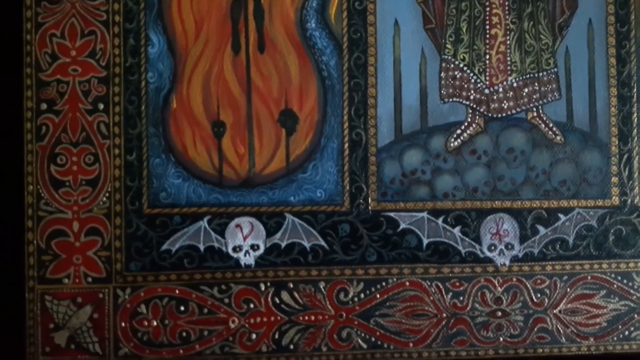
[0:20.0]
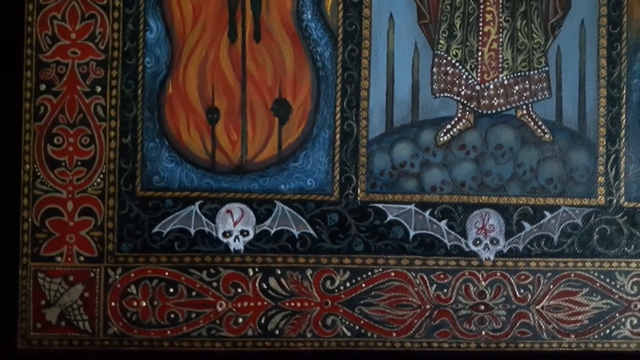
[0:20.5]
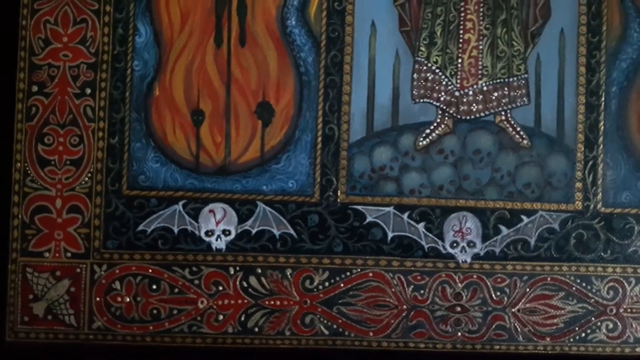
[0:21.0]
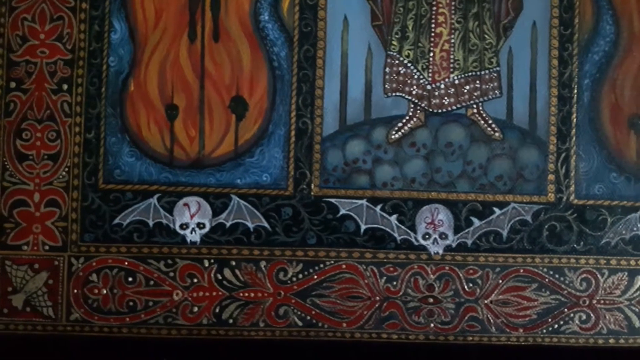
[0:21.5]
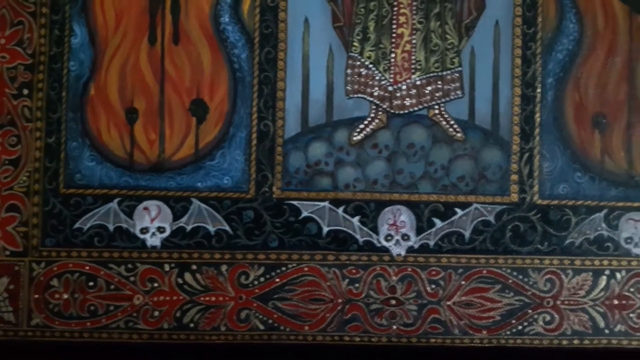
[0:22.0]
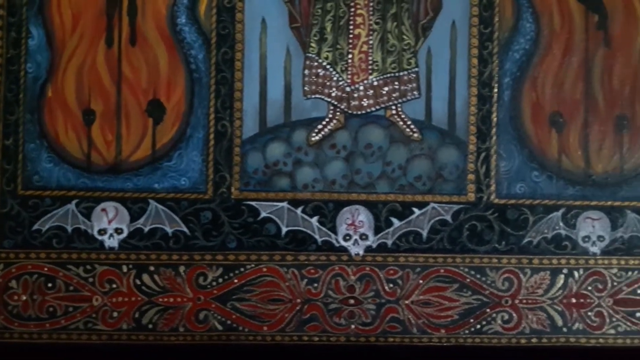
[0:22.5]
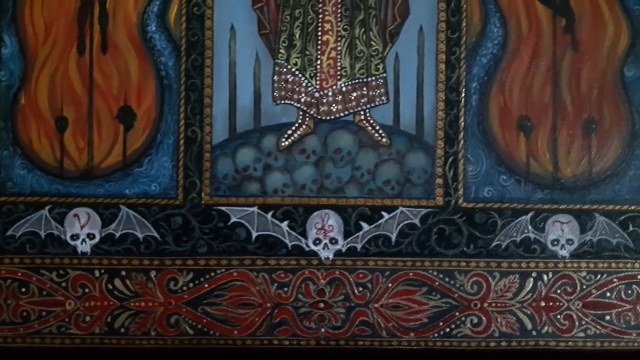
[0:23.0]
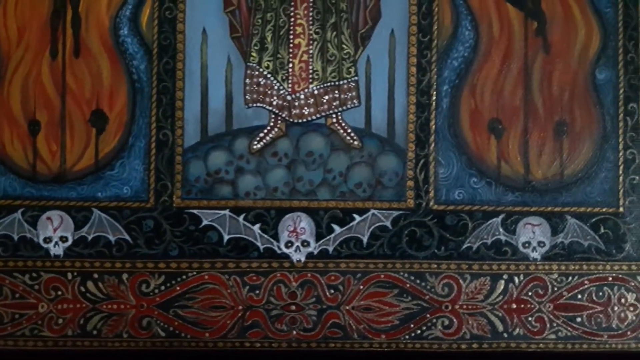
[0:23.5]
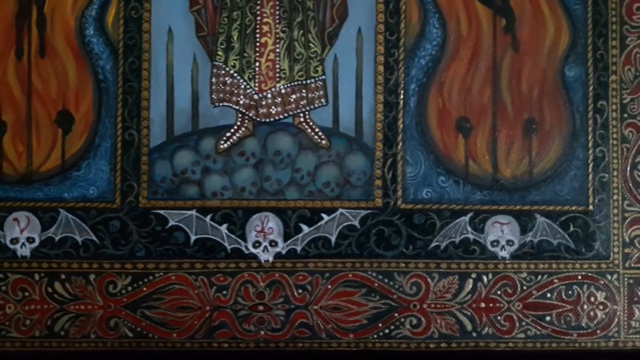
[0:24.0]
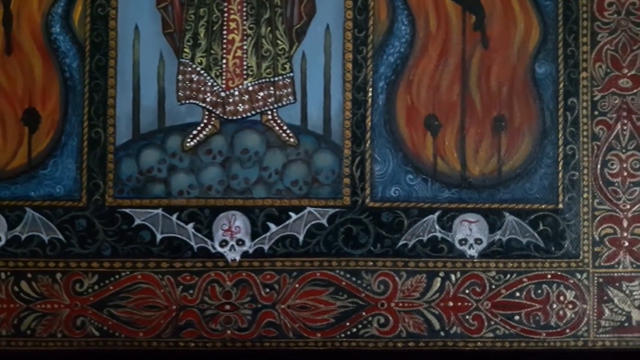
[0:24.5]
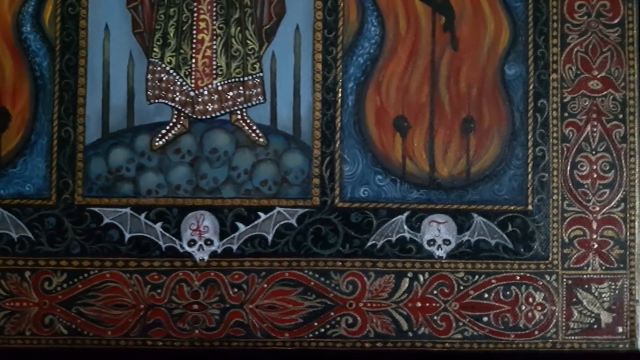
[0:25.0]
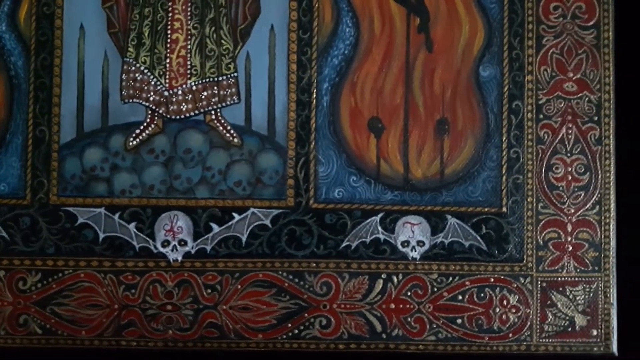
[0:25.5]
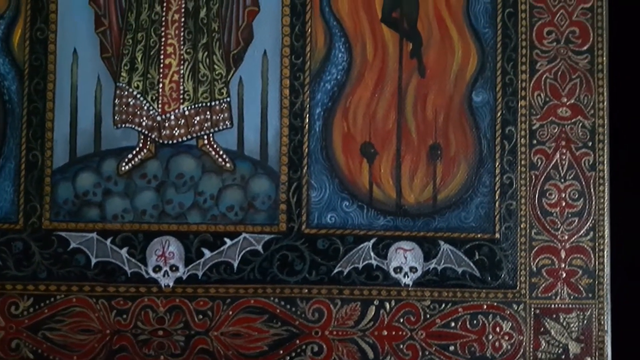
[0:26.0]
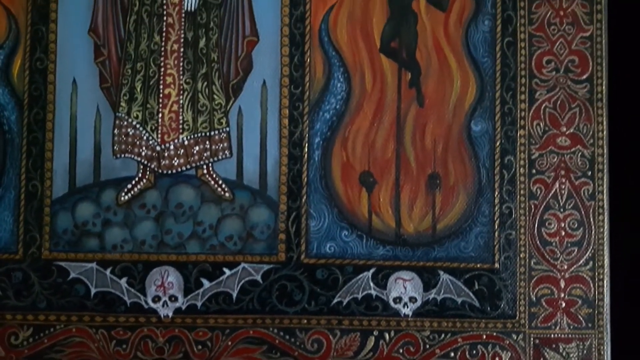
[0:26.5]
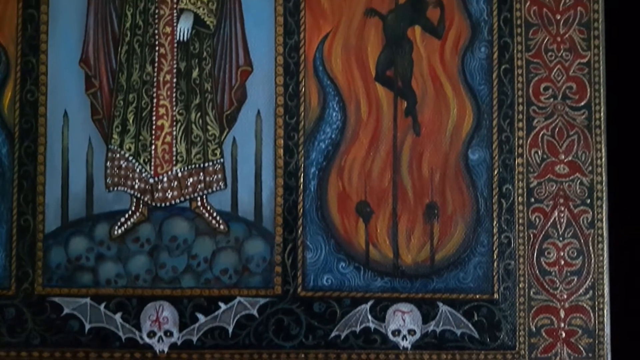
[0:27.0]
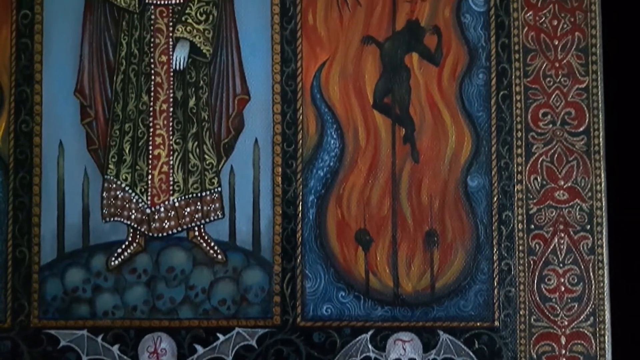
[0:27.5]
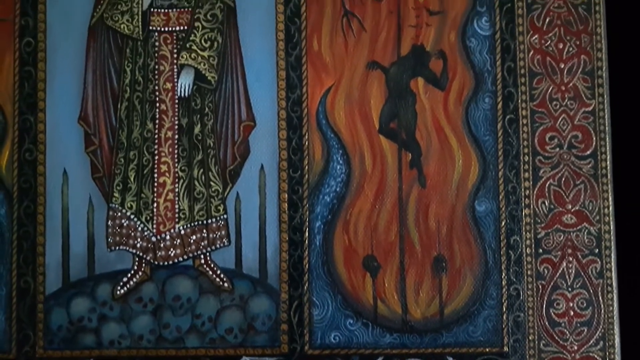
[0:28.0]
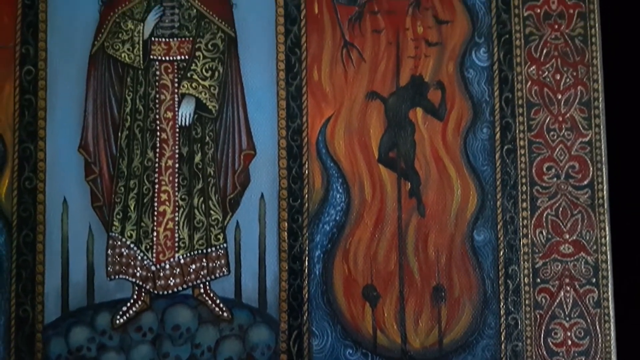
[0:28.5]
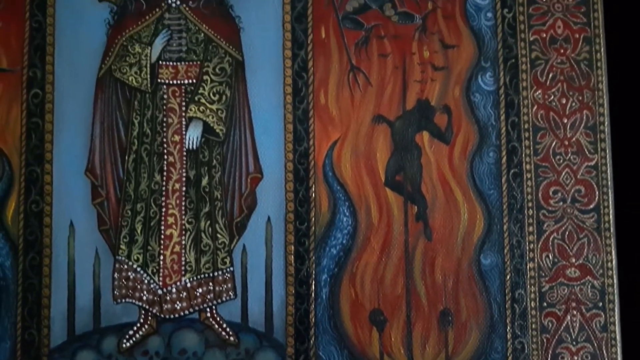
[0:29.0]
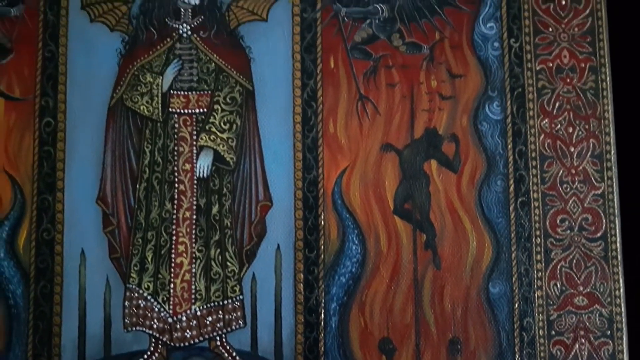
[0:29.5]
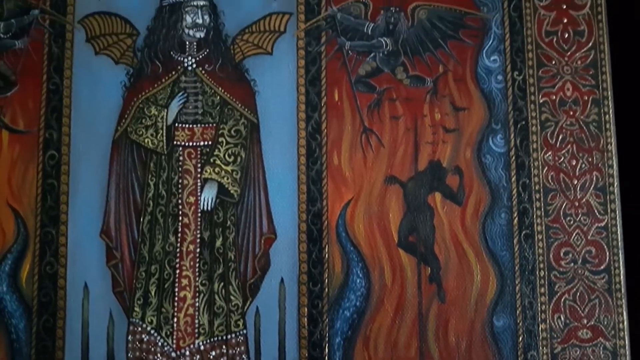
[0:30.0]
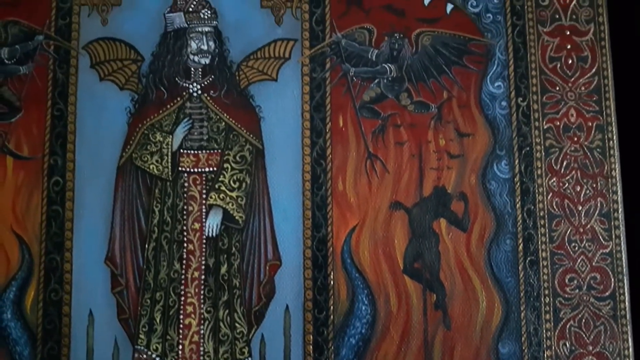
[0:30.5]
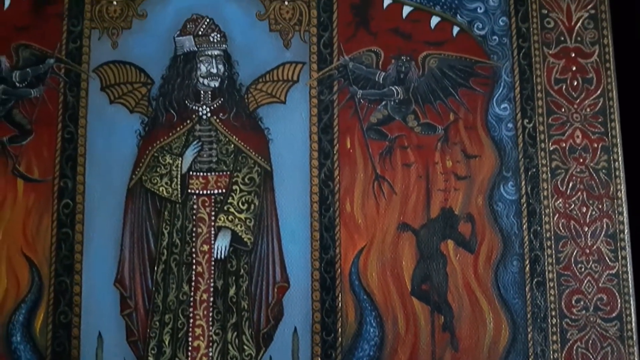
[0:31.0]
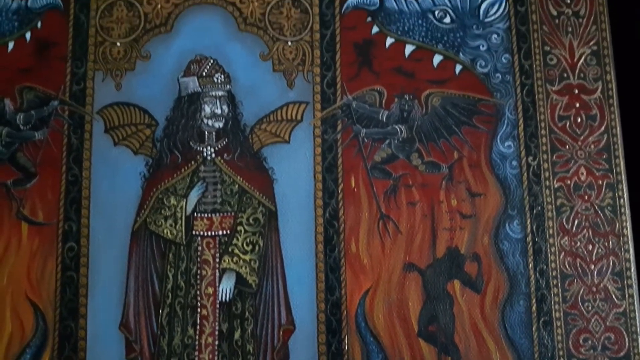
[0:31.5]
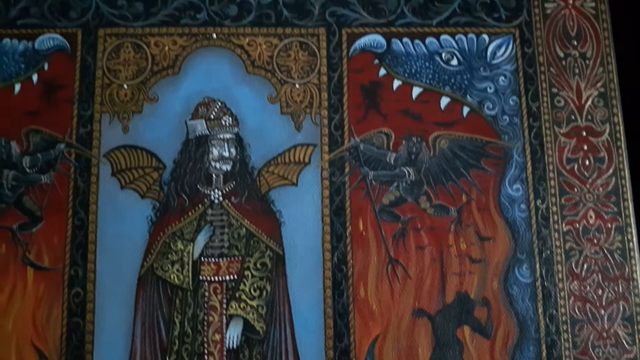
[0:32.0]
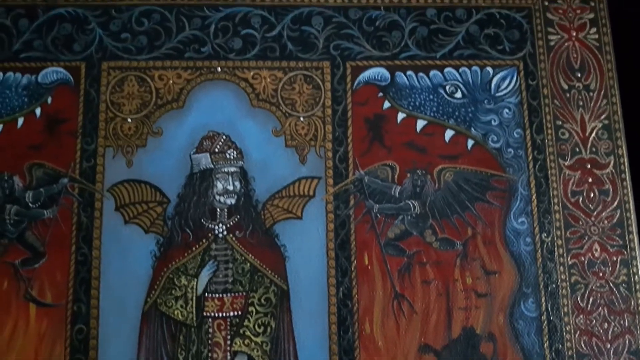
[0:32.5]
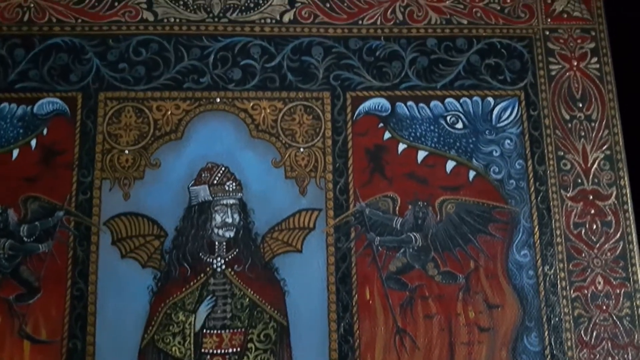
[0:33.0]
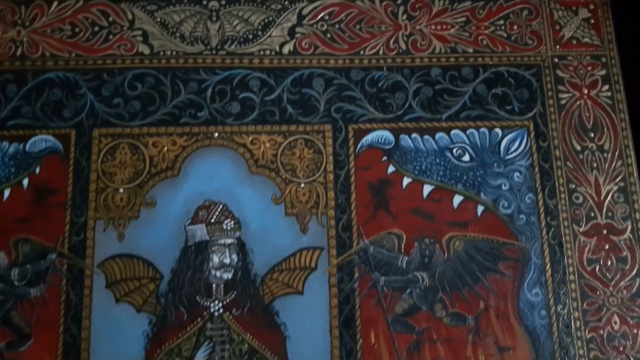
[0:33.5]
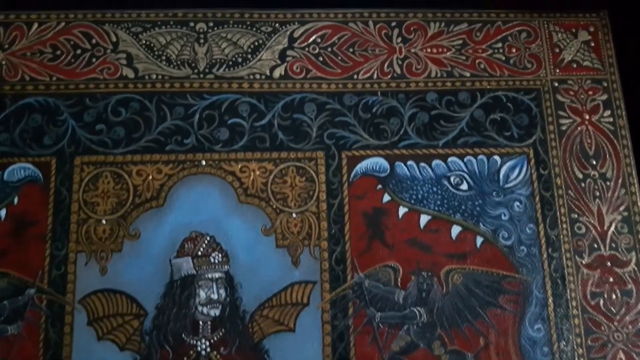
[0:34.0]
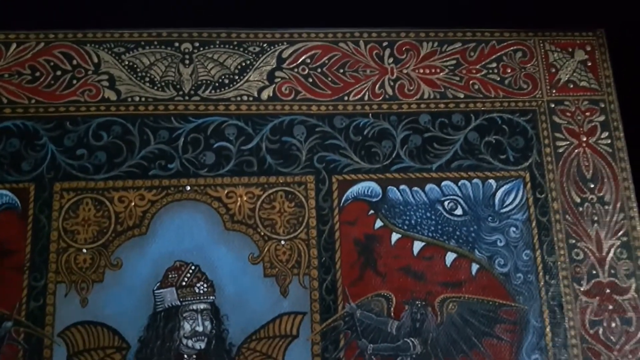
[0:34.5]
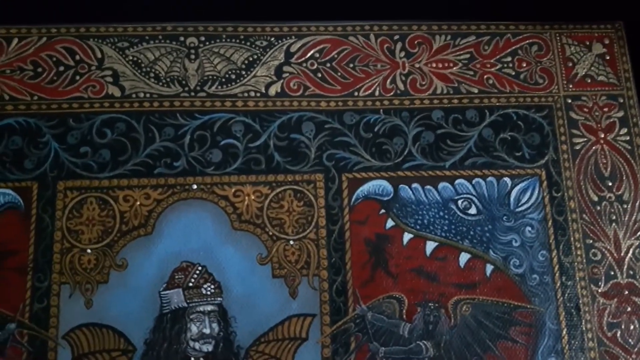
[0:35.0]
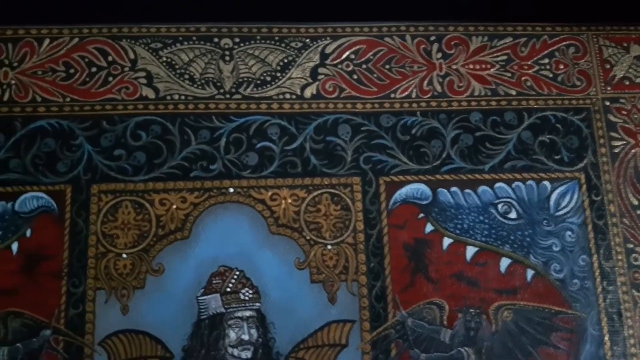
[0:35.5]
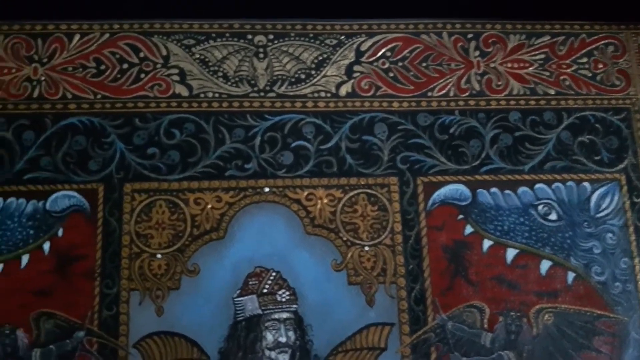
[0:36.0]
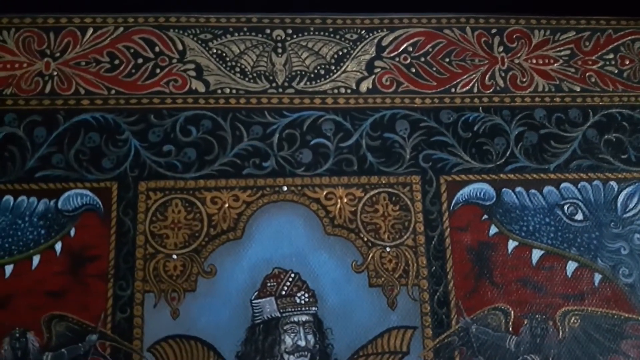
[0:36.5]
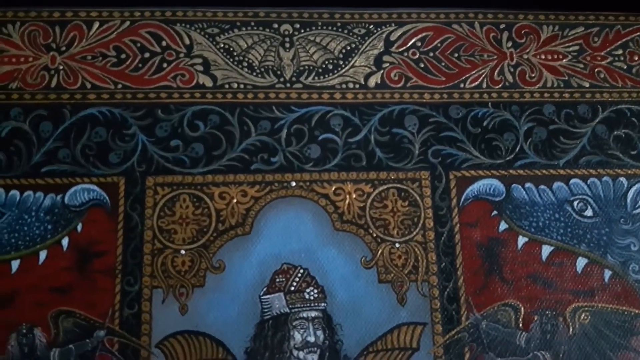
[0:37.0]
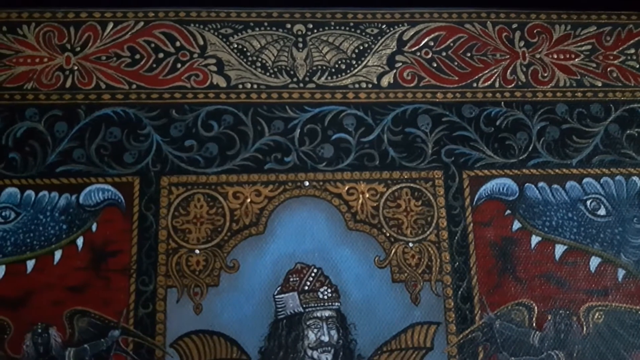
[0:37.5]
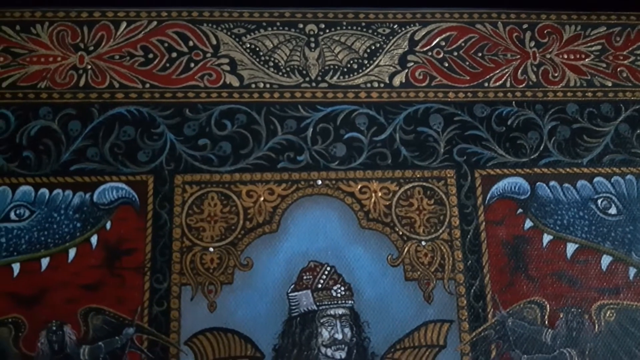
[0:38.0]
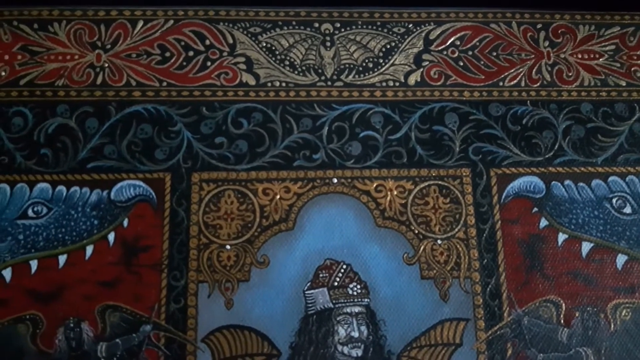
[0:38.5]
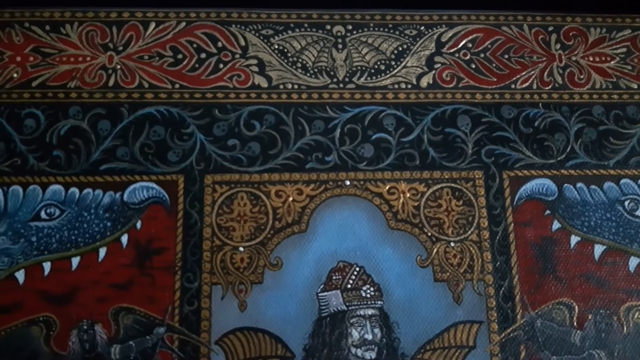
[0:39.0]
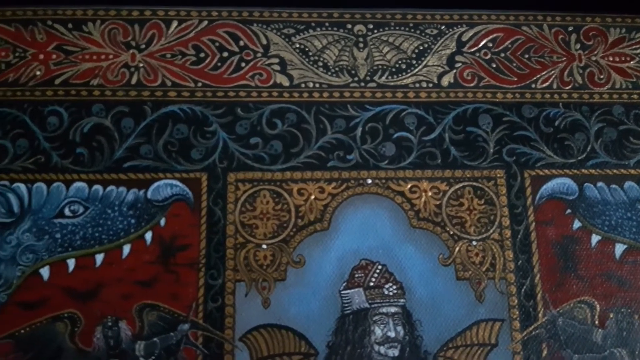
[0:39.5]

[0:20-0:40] A piece of art that appears to be made of some type of pearl inlay is shown in close-up on two skulls with bat wings on them. The skulls appear to have red painted letters: the left skull has a V, and the right skull has an indiscernible letter. The camera pans over to a third skull that appears to have the letter T or J painted on it. The outside border has red paint and an artistic style. The video then pans upwards to a depiction of a soul impaled in torment in hell, with a demon with wings and a pitchfork flying around above it. Flames cascade above and beyond the demon and the soul, depicting hell. Vladimir the Impaler is visible on a panel in the middle, just to the left of this depiction. He wears traditional Slavic dress with gold inlay in the robes and a red sash on the middle, a cap, and has two bat wings behind his back.